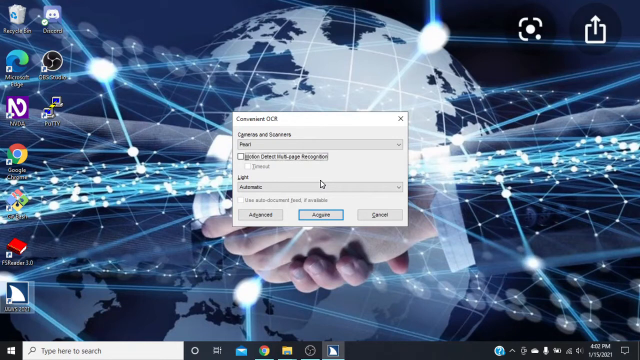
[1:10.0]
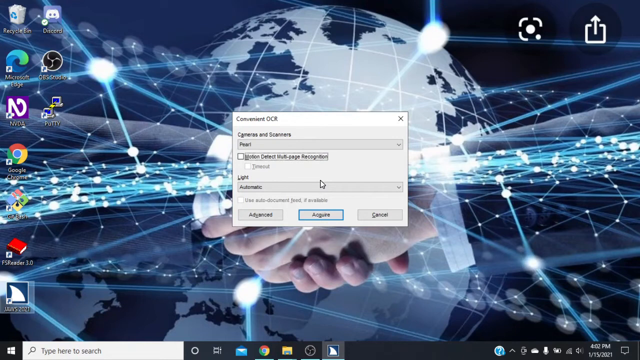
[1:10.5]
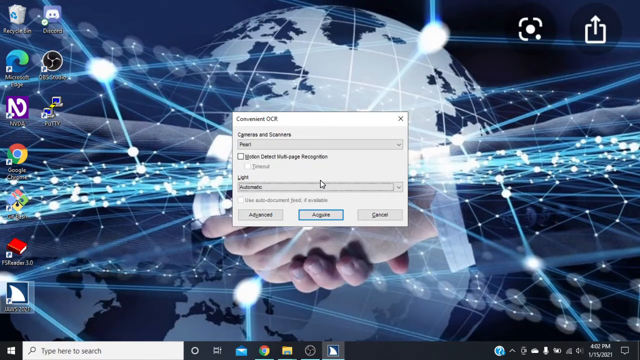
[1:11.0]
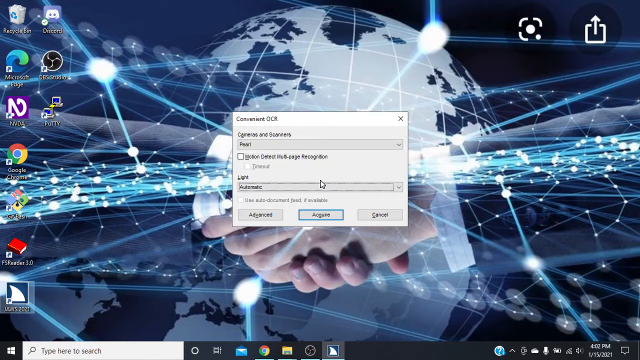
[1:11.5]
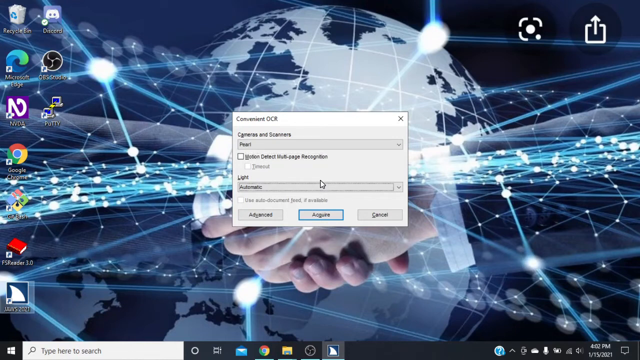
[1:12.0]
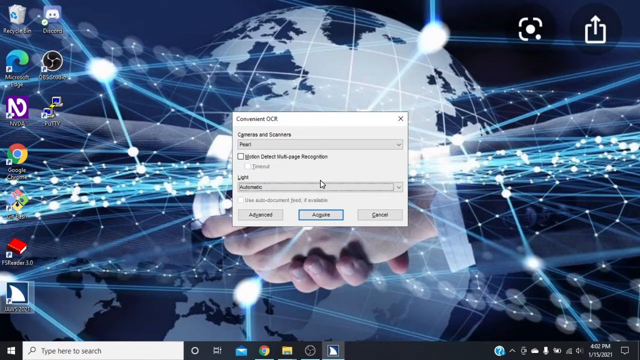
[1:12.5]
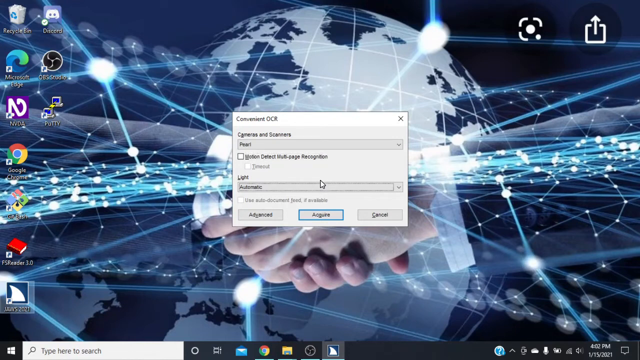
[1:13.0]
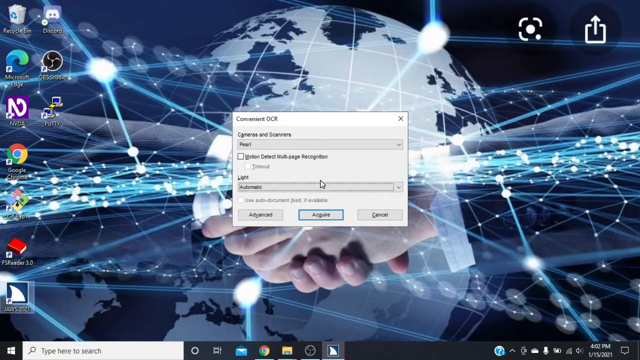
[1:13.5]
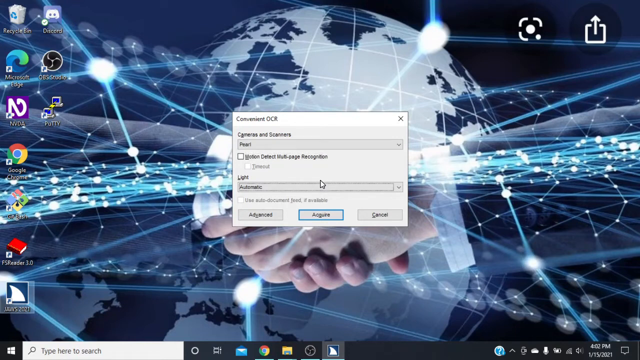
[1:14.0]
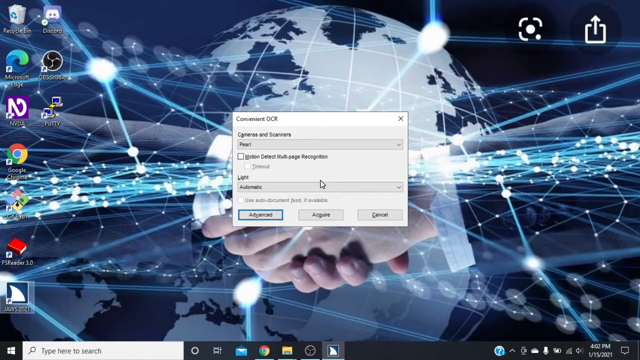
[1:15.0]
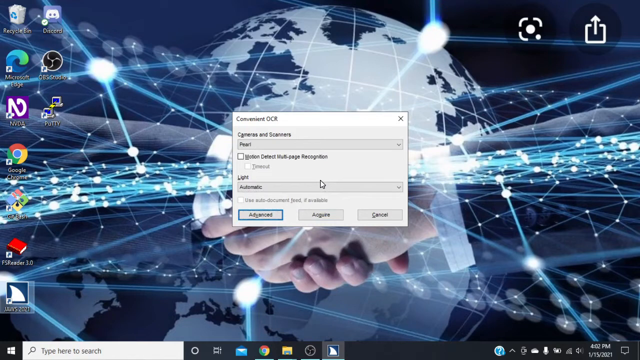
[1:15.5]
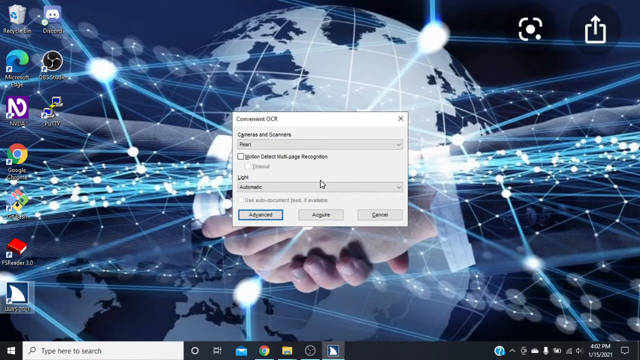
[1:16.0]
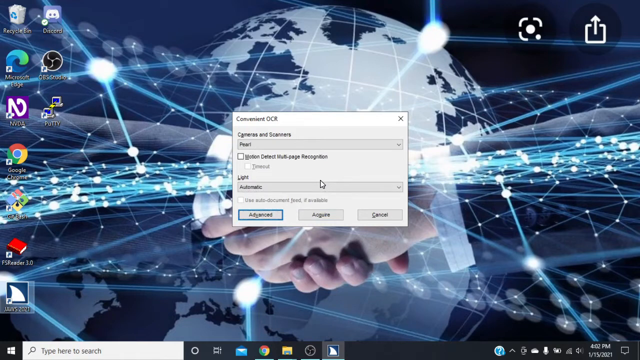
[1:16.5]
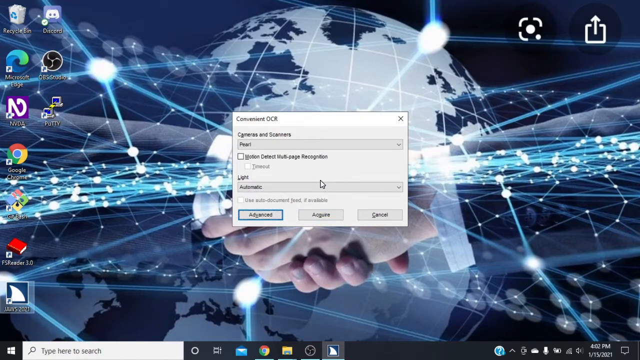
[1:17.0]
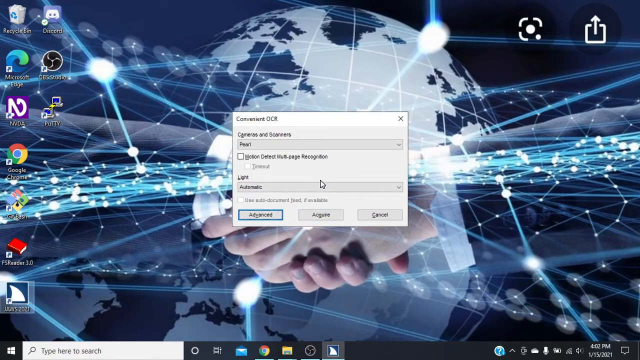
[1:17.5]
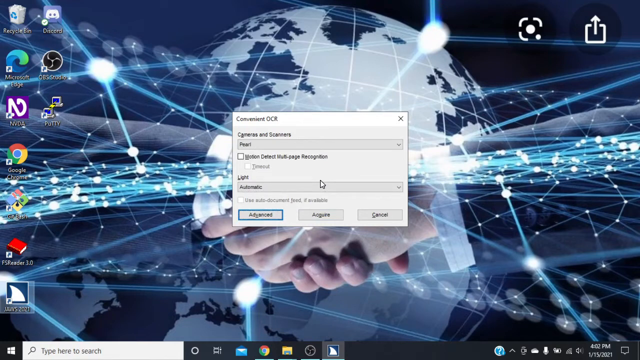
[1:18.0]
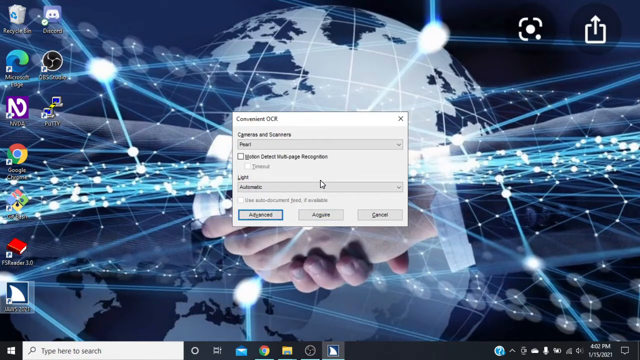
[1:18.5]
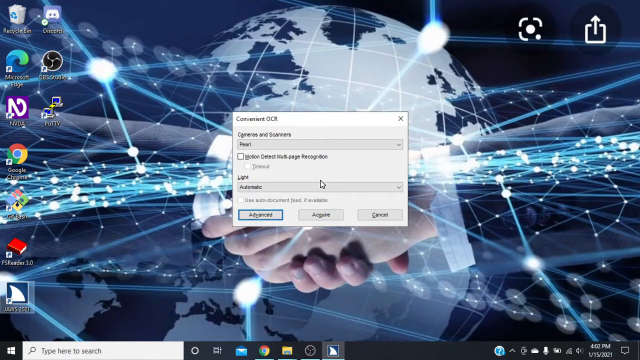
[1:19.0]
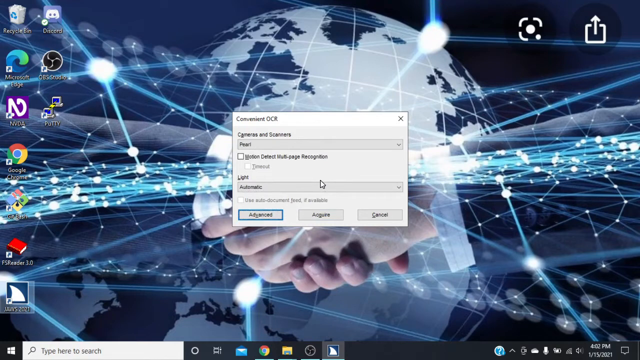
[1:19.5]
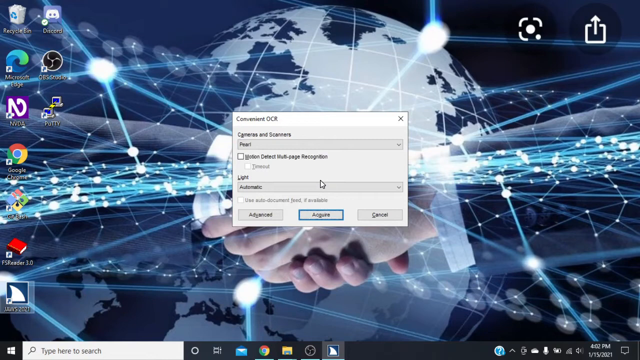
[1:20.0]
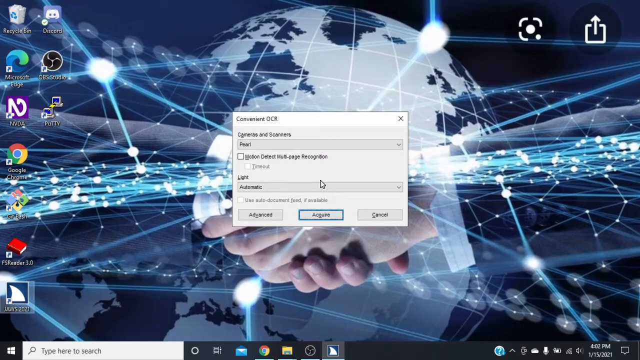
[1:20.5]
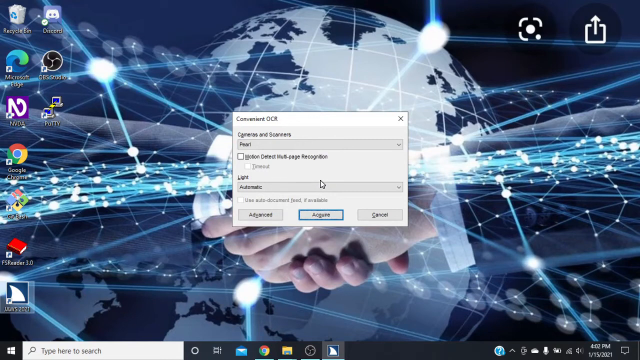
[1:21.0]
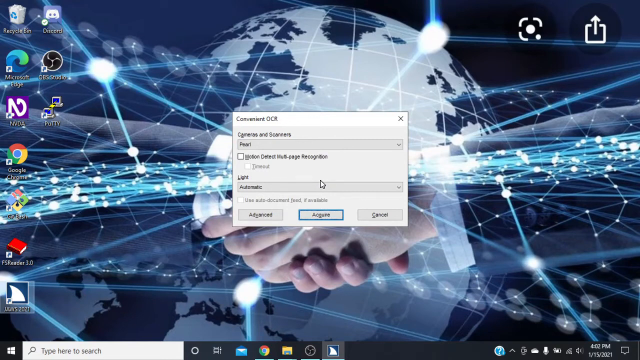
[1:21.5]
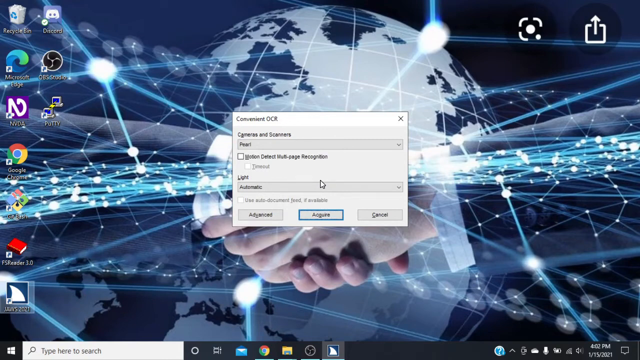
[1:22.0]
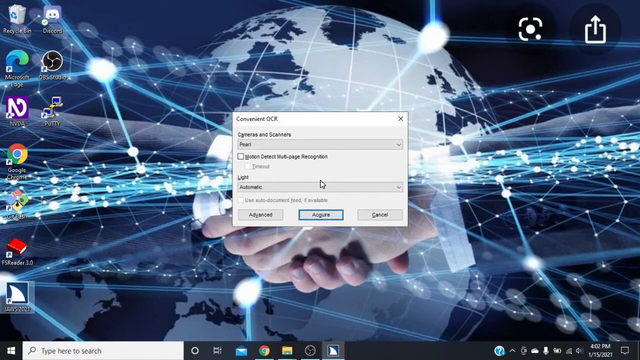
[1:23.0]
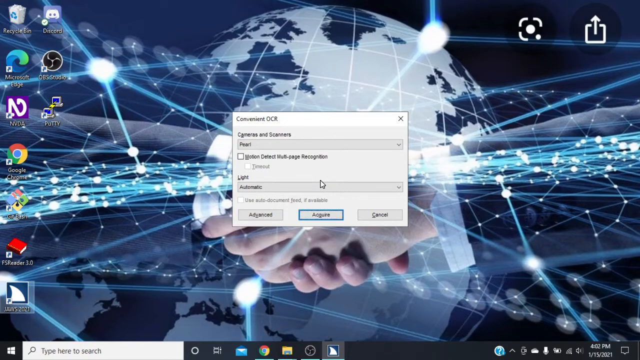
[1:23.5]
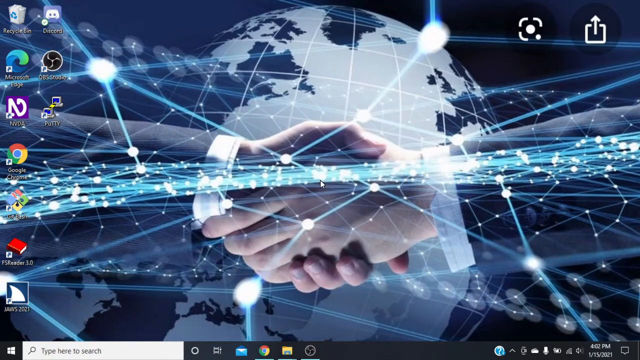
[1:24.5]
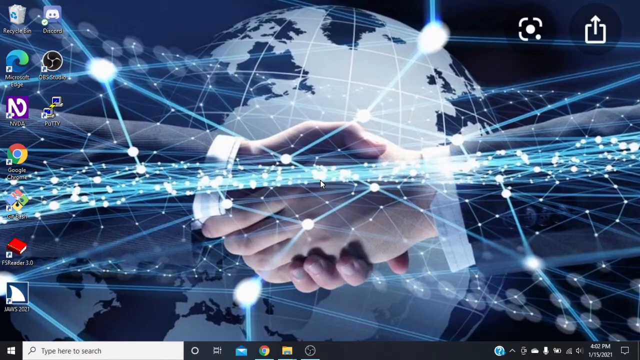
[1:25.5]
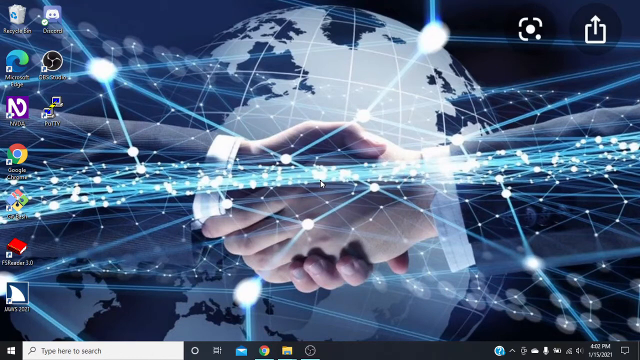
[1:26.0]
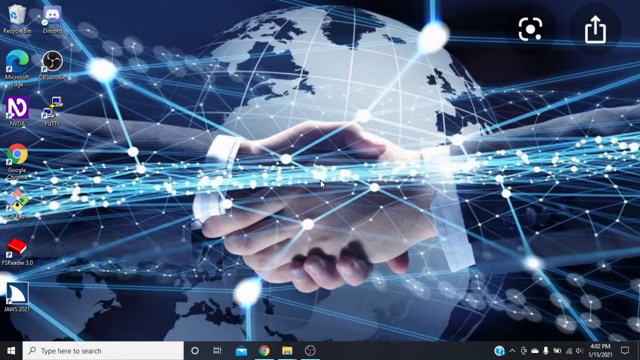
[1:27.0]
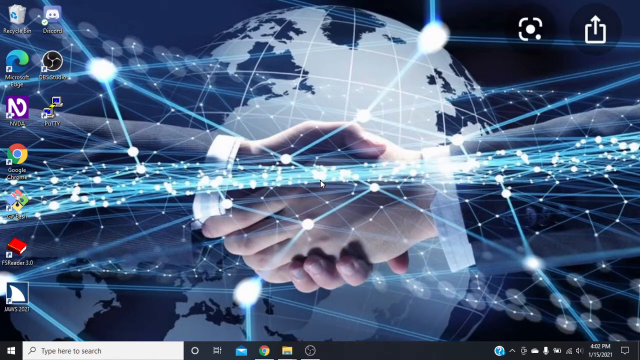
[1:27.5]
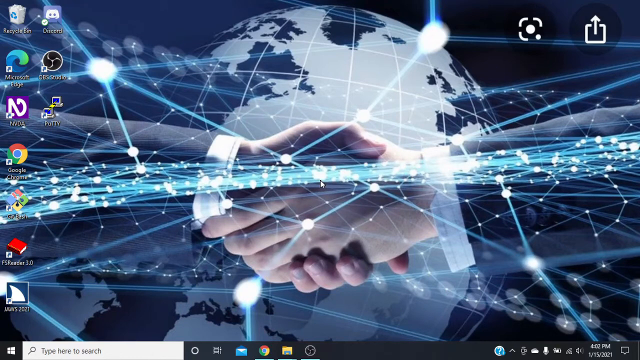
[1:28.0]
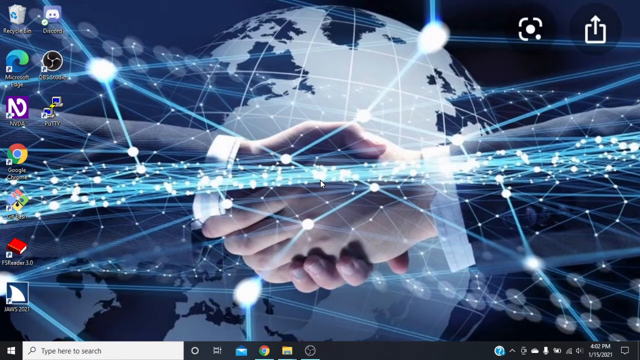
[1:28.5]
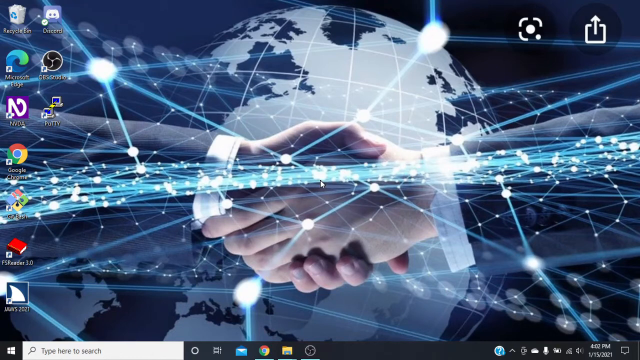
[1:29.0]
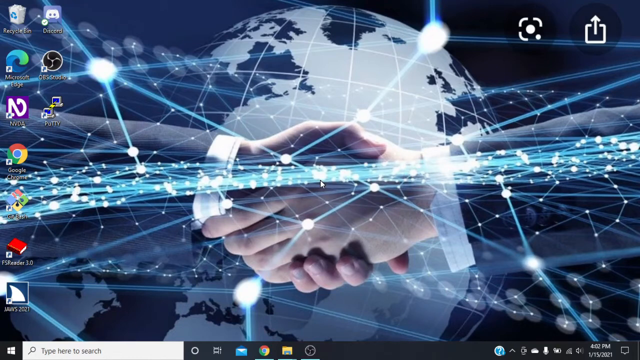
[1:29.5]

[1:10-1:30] The "motion detect multi-page recognition" text is highlighted again for a brief moment before the highlight disappears. The photo icon and send icon at the top left seem to possibly be part of the image used as the screen saver. On the bottom bar, next to the Microsoft logo and the search bar, are icons for Google Chrome, Settings, Mail and a folder. There is also a shark icon that seems to belong to the open program. This program is the last one at the bottom left of the icons on the left side, which was partially illegible but seems to show the year 2021. The search bar at the bottom of the screen says "type your search" in black text, with a magnifying glass to the left of the text. The user exits the program, leaving just the computer screen.